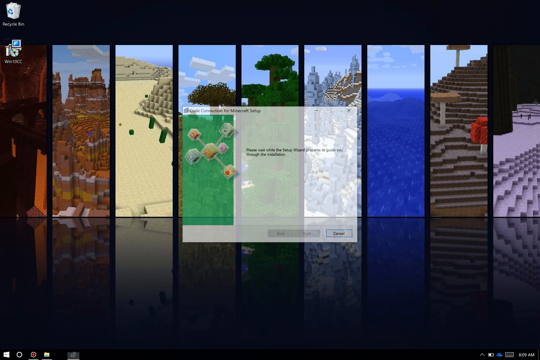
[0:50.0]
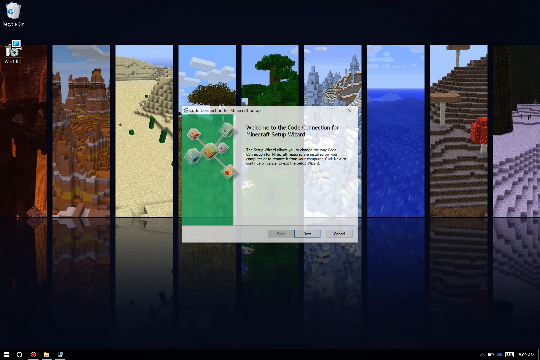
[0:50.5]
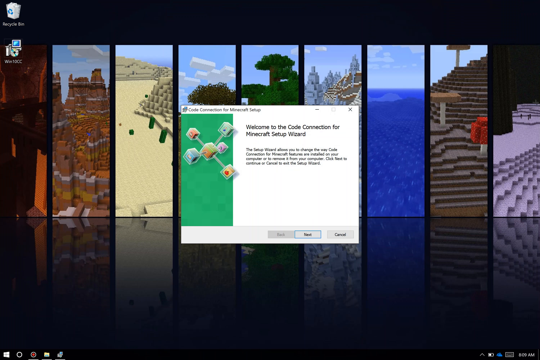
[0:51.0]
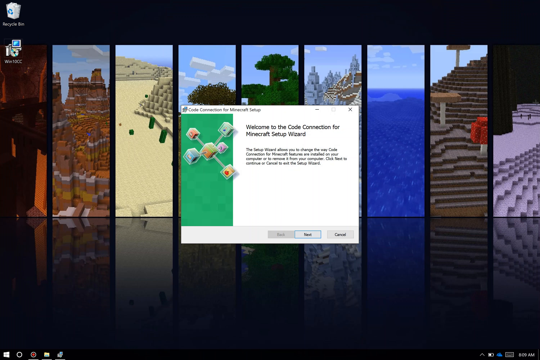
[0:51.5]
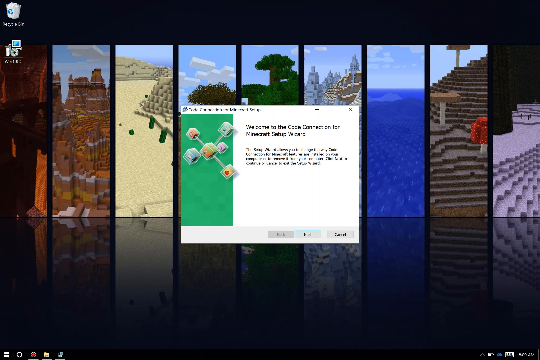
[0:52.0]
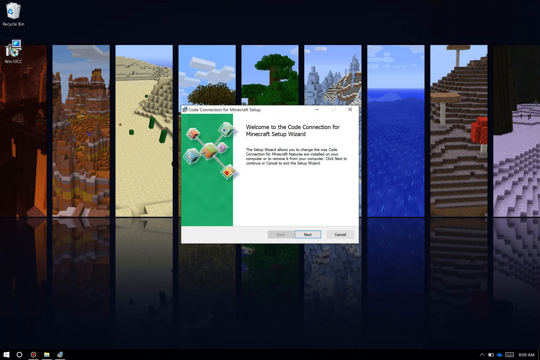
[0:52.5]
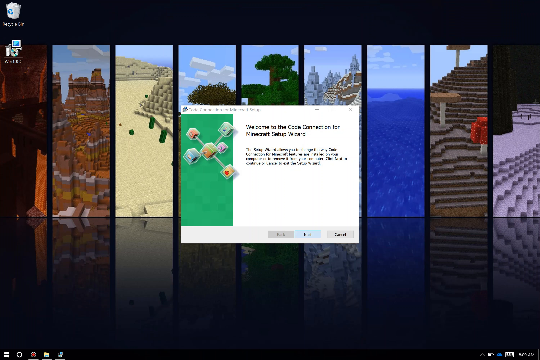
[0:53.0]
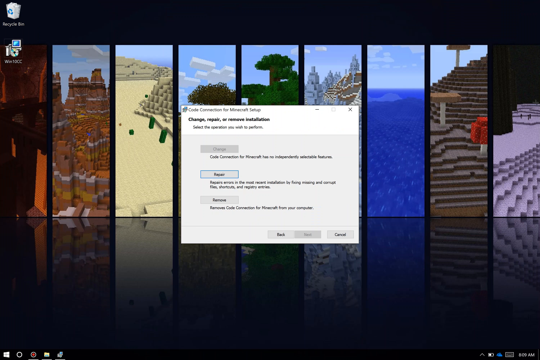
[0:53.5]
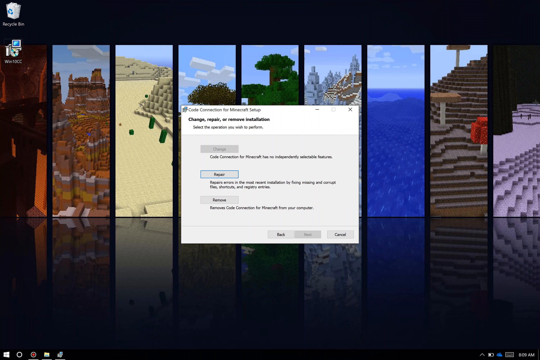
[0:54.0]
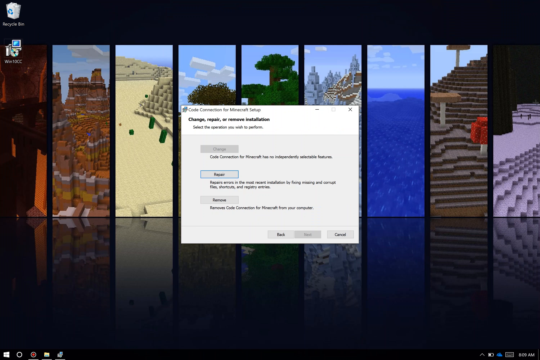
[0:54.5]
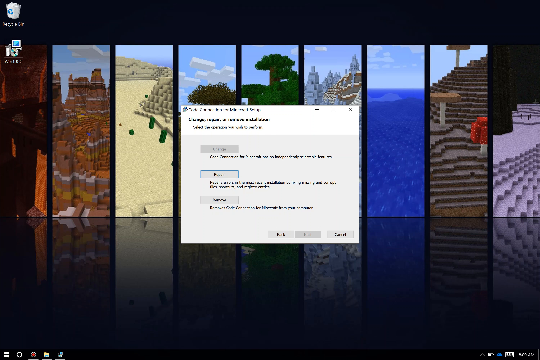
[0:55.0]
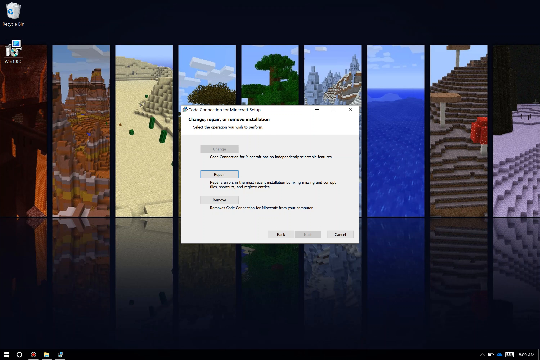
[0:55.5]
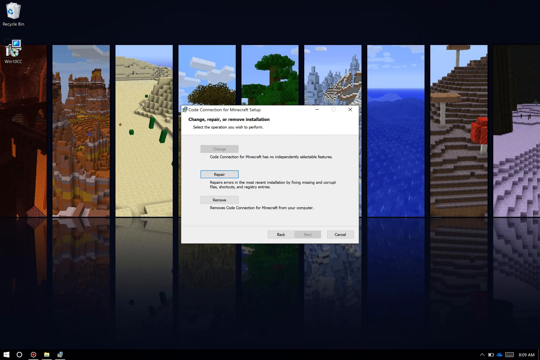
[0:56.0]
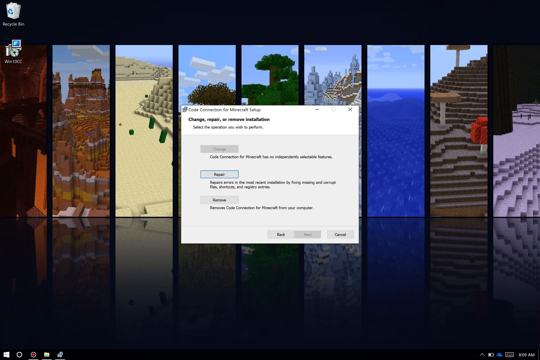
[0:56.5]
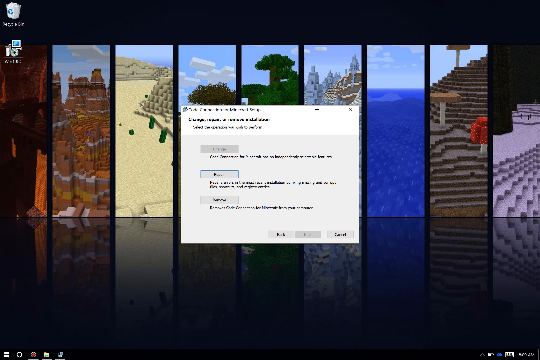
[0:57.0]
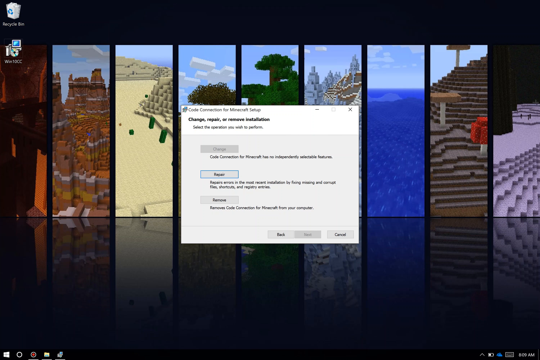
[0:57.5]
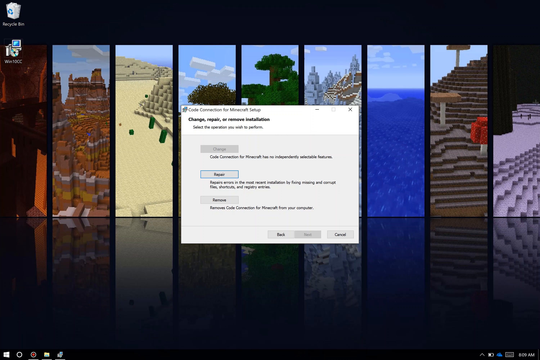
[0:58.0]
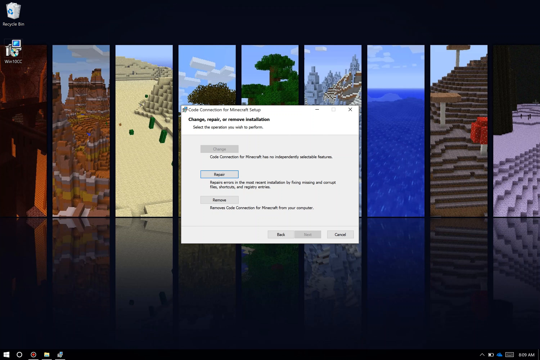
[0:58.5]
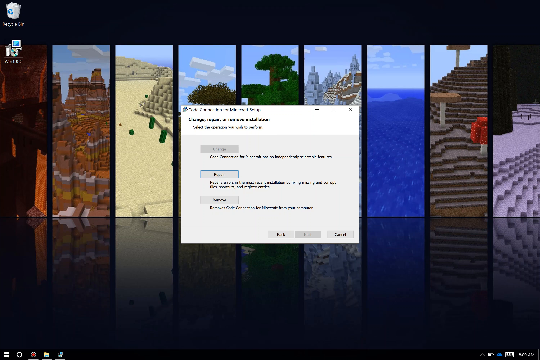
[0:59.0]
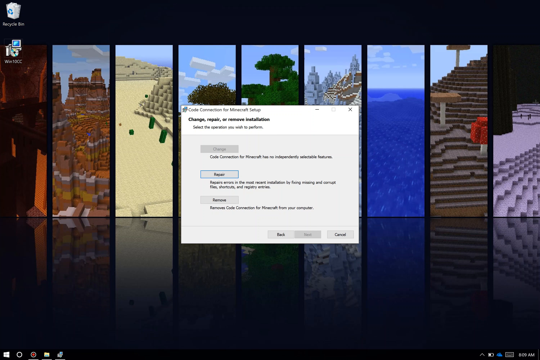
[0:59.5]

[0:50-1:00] The Code Connection for Minecraft setup wizard is open. It says "the setup wizard allows you to change the way code connection for minecraft features are installed on your computer or to remove it from your computer click next to continue or cancel to exit the setup wizard". It apparently is already installed, so only a repair or remove option is available. On the desktop background, the sixth terrain is somewhat icy and light blue, and the seventh is just an ocean with a lot of water. The last one might be the netherworld, with a big black pillar and a lot of sandstone that is almost white and gray. The second-to-last one is darkish brown.